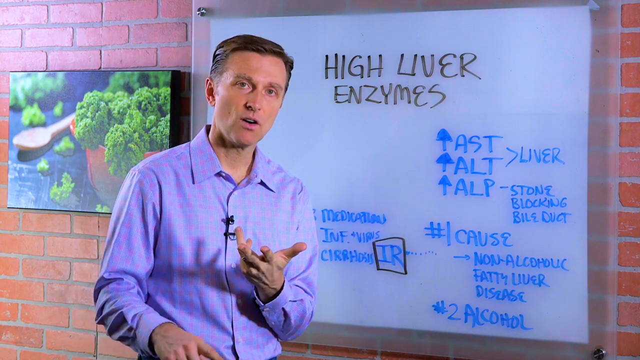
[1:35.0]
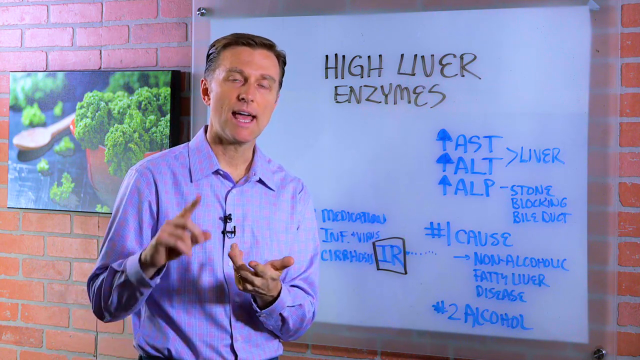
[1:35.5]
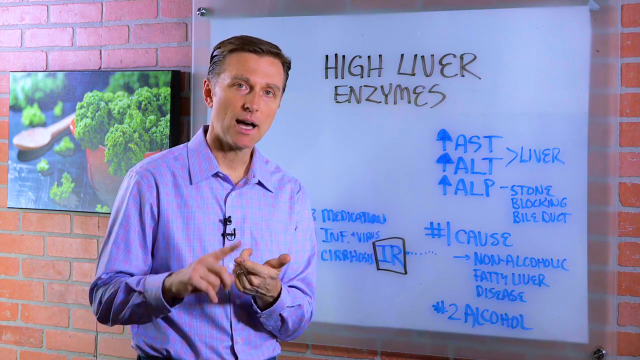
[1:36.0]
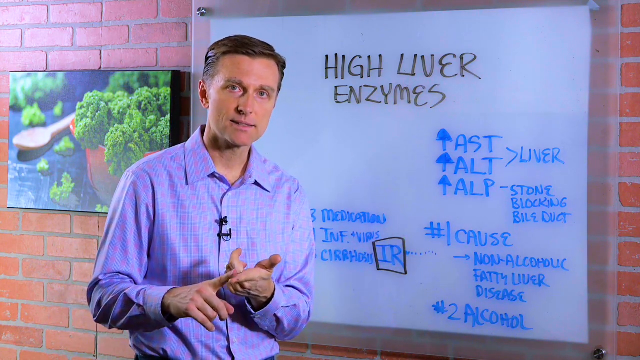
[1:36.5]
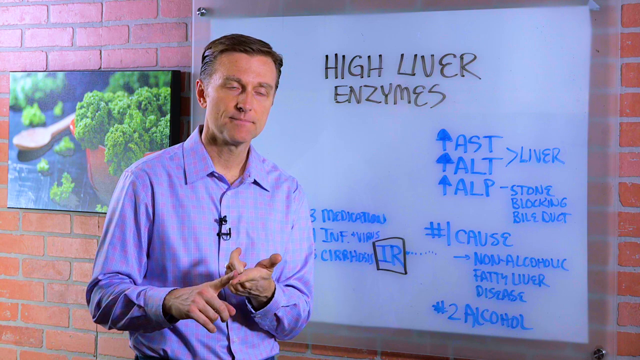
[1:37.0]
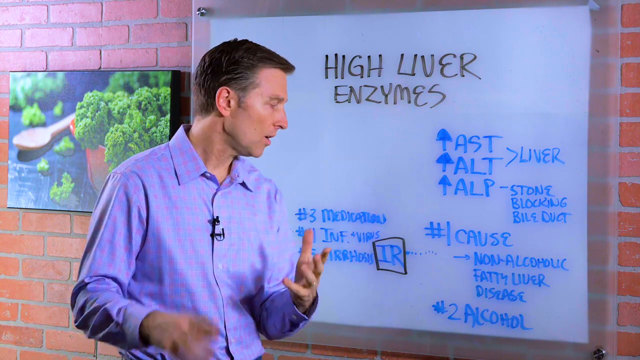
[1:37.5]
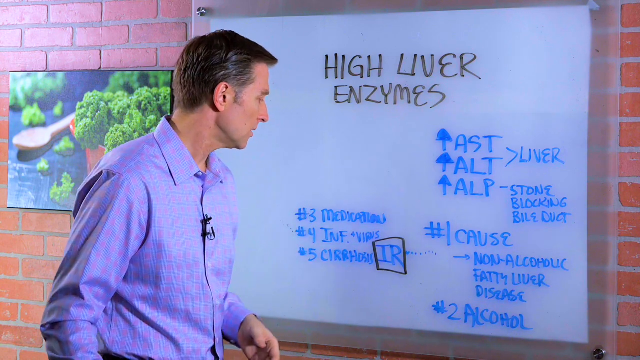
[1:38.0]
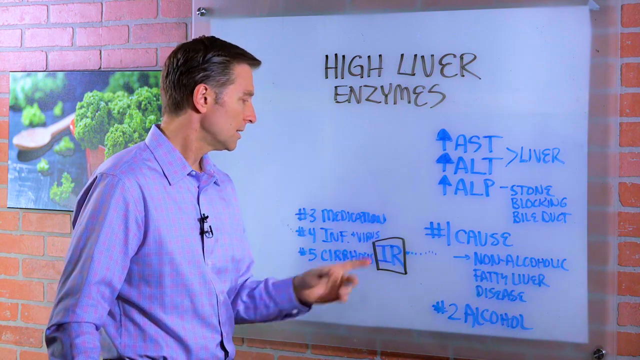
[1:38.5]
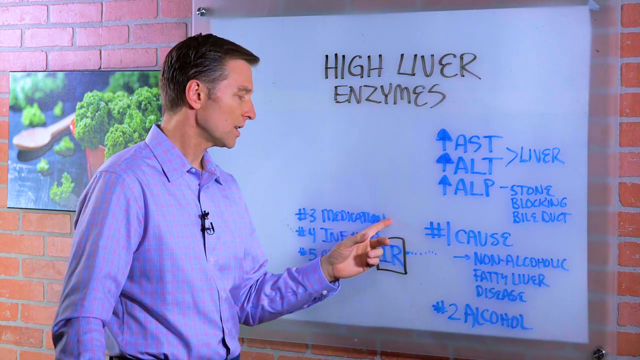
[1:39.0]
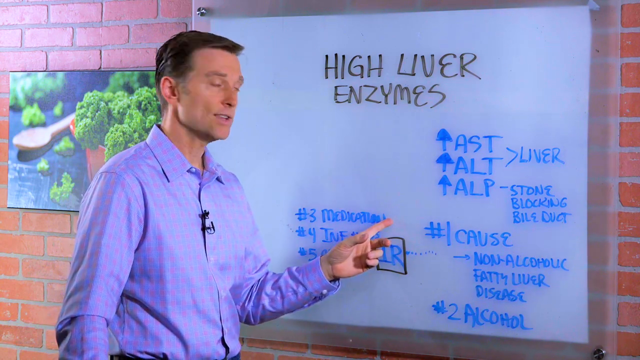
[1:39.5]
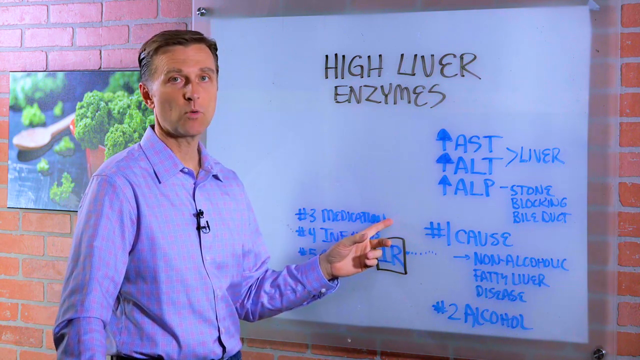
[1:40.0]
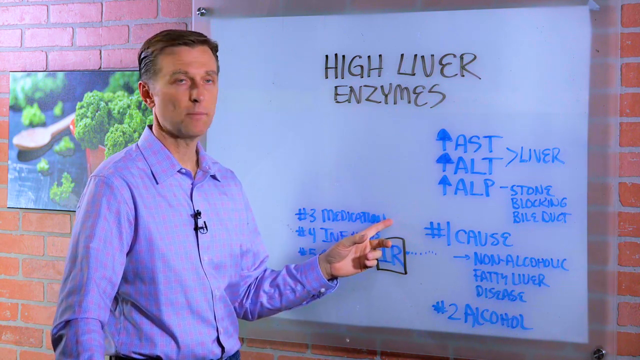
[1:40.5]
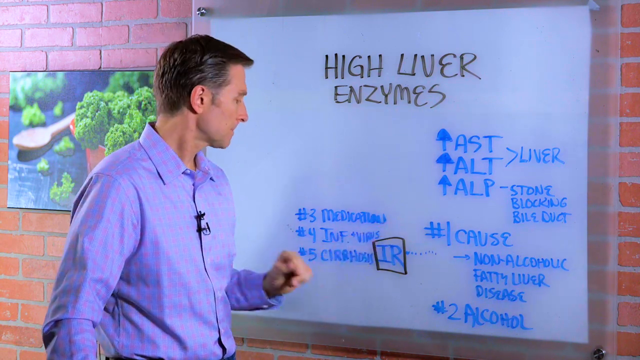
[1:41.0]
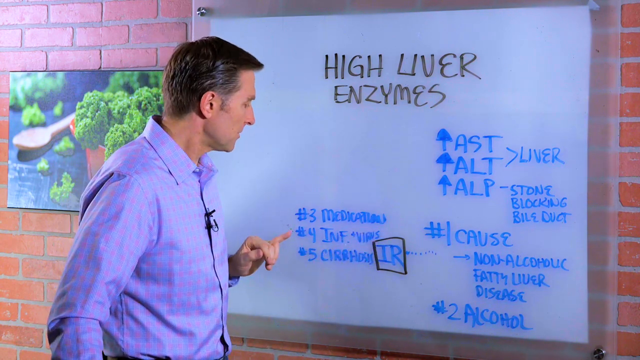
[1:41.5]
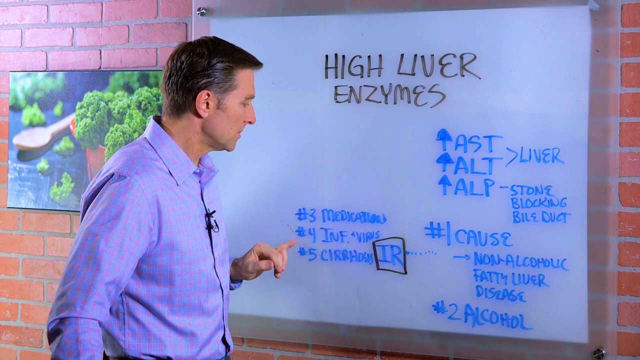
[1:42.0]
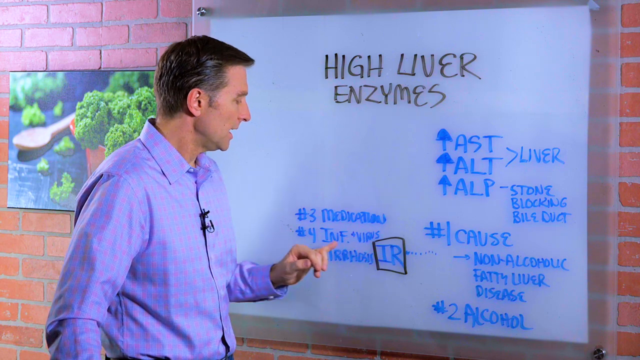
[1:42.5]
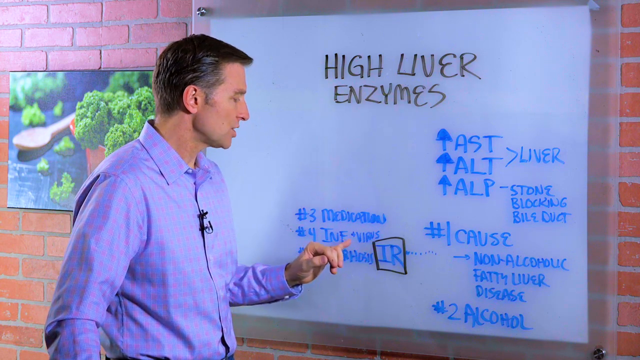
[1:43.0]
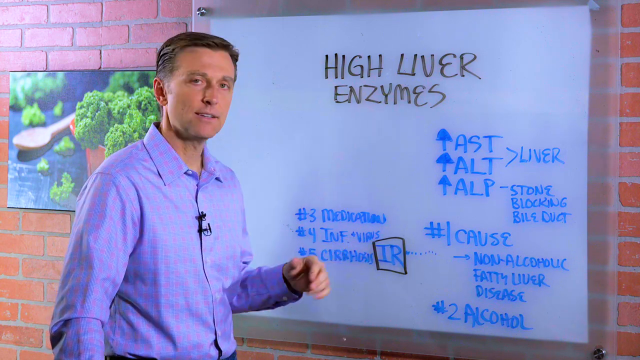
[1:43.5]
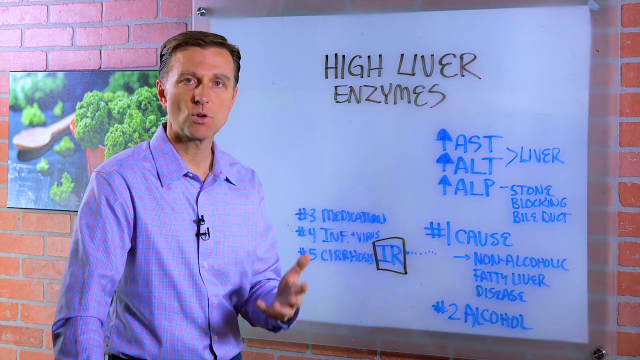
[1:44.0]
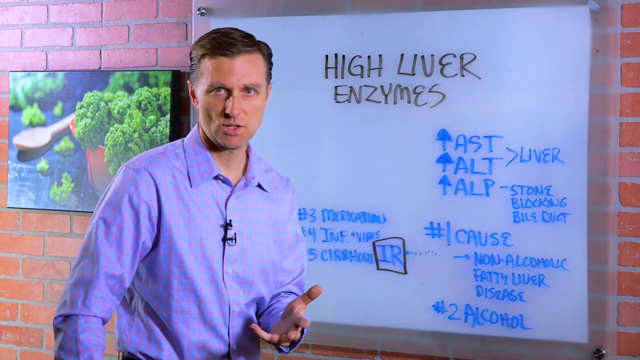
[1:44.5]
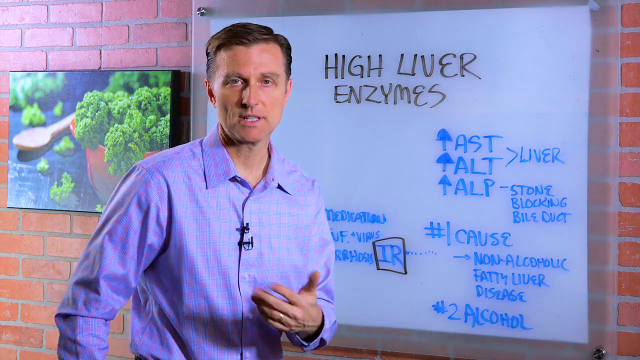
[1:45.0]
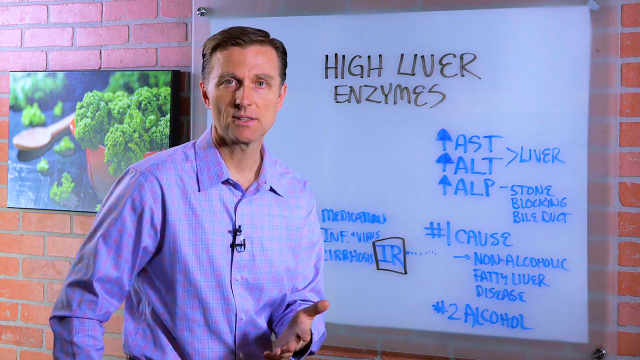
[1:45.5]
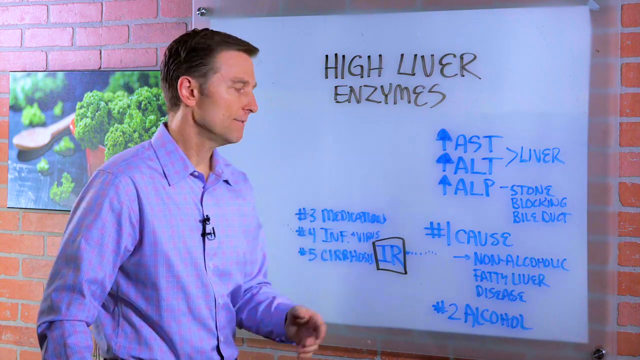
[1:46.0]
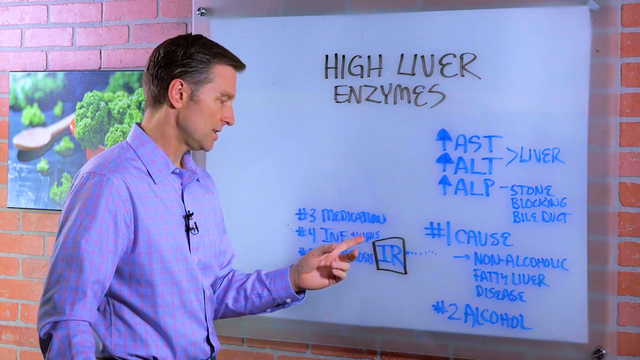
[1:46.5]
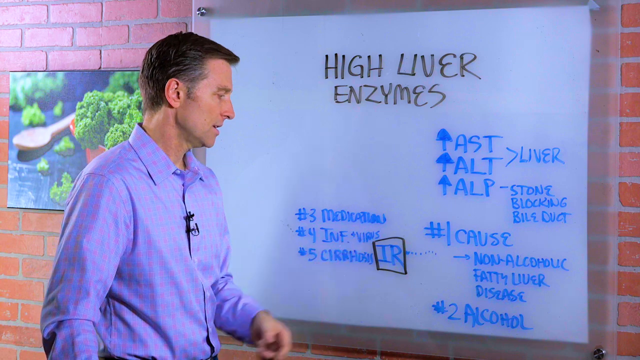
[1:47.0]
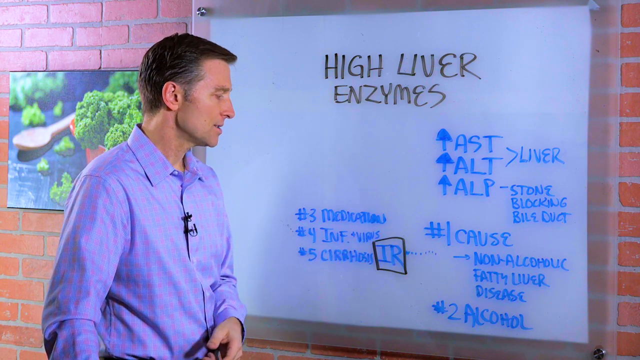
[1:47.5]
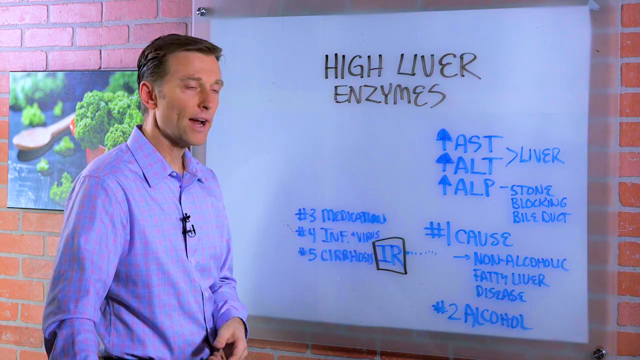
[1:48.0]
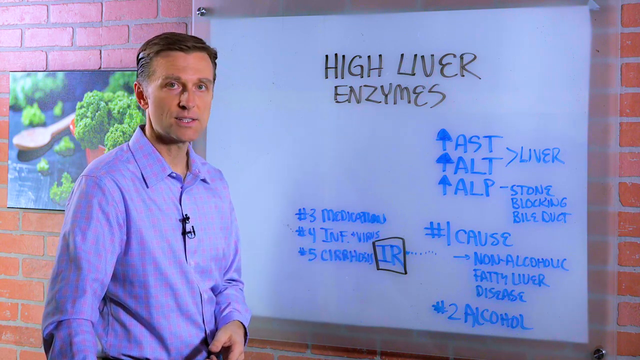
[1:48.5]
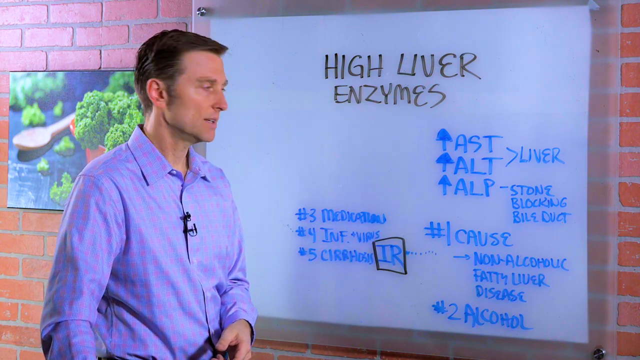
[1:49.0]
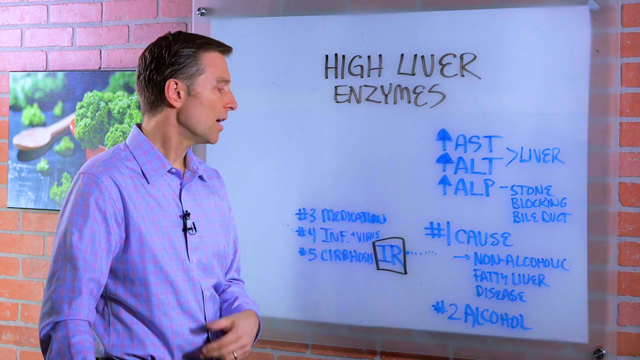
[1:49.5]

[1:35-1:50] The man counts with his fingers, looks at the whiteboard, and points to "medication" with his index finger. With his pinkie finger he points to "number four IMF veins." He looks at the camera and makes motions, then points back to the whiteboard. He repeats this several times: counting with his left hand, pointing at "medications" and "IMF veins," turning back to the camera, and making motions with his left hand. He wears a blue and pink striped collared shirt and a microphone. His hair is blonde-brownish with streaks of gray. He looks at the camera and then looks back.